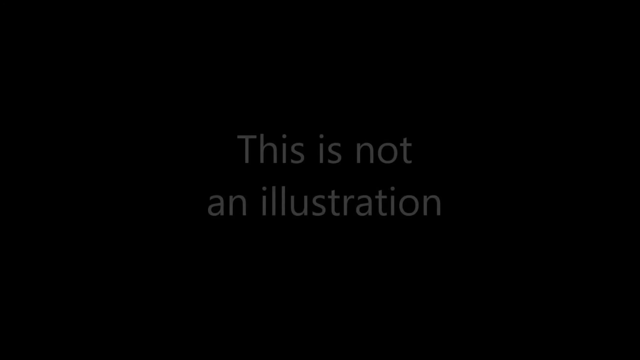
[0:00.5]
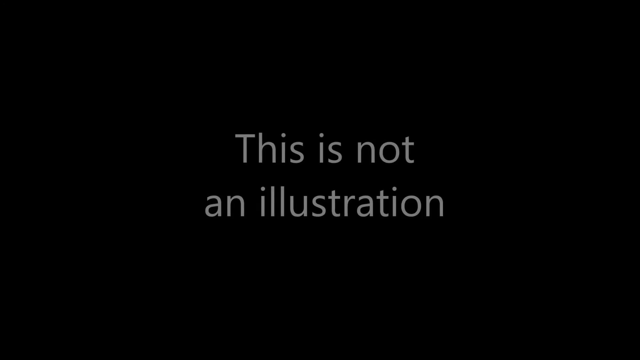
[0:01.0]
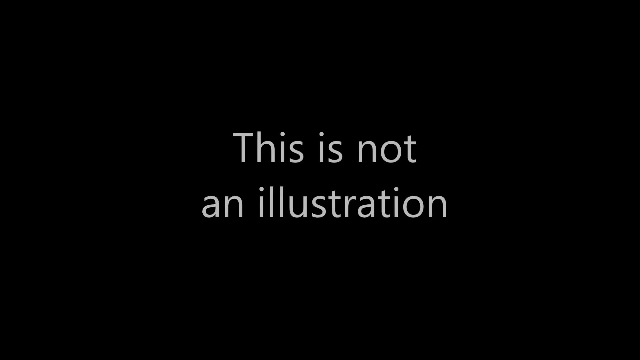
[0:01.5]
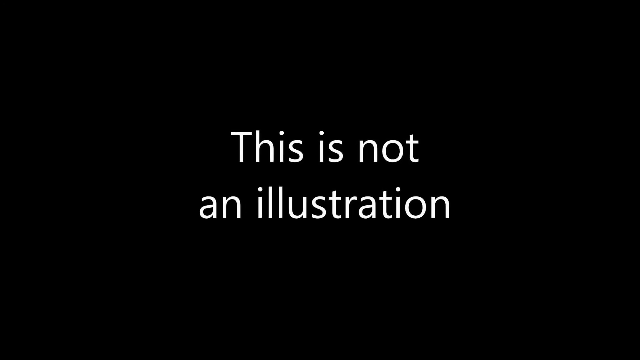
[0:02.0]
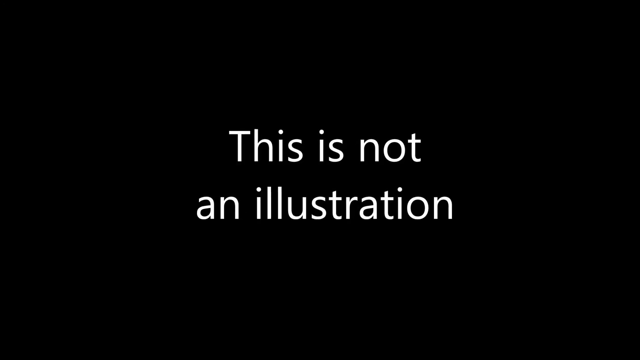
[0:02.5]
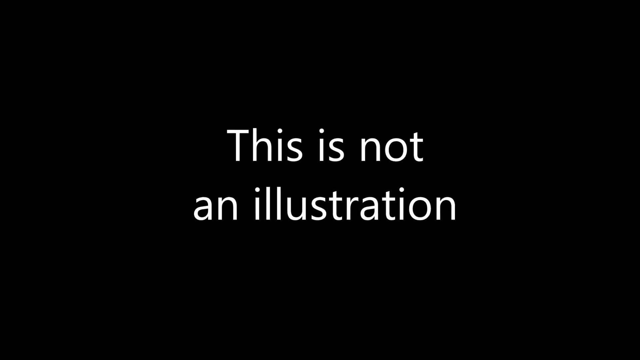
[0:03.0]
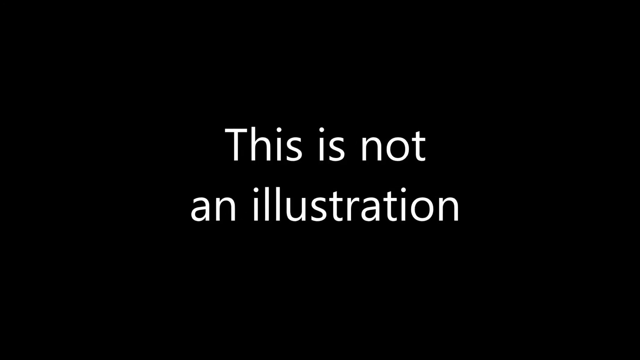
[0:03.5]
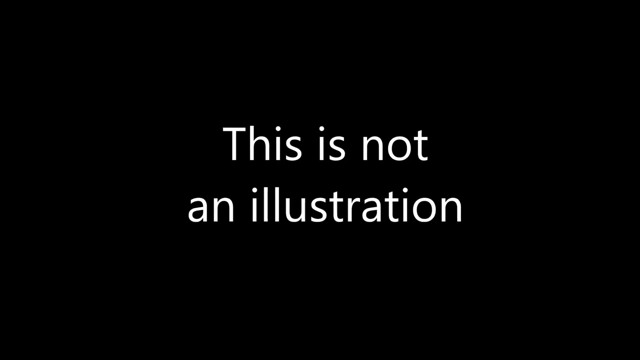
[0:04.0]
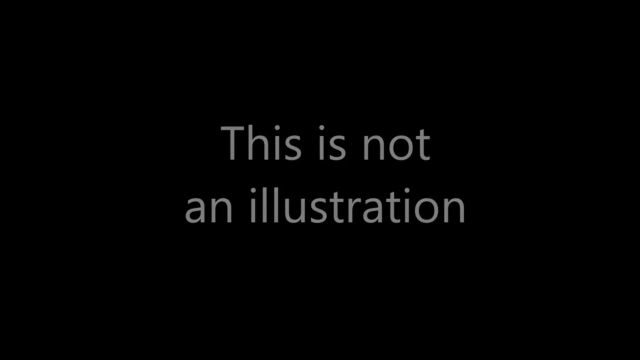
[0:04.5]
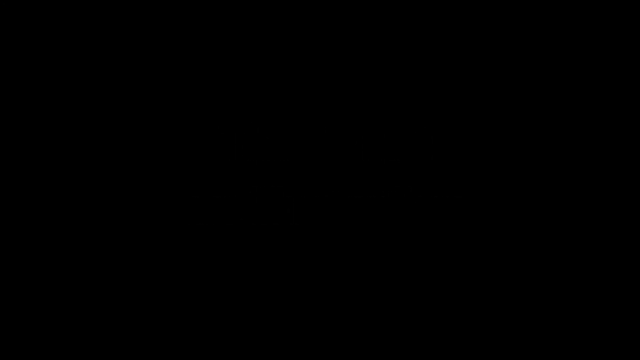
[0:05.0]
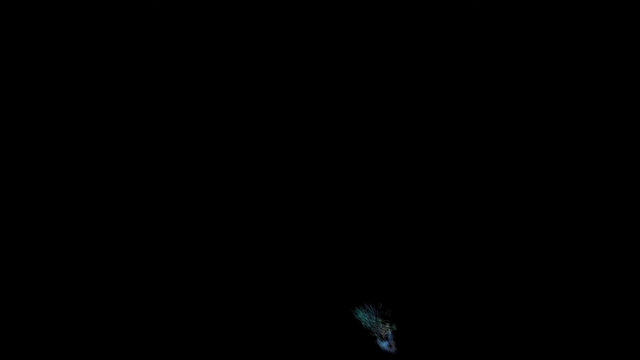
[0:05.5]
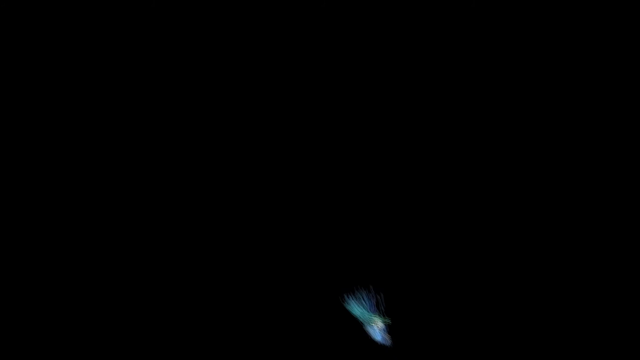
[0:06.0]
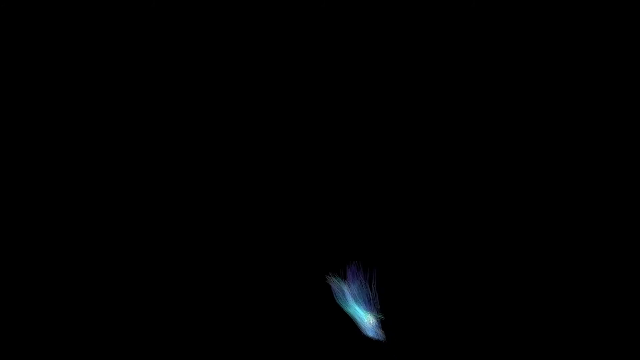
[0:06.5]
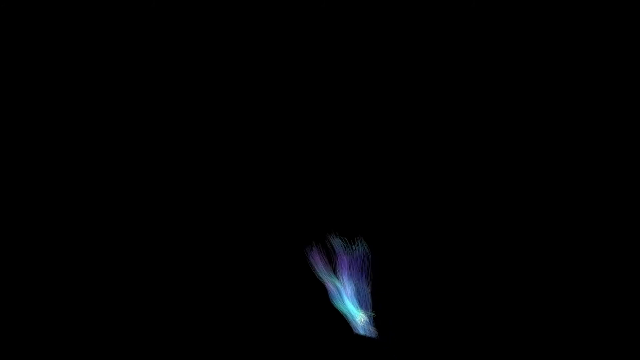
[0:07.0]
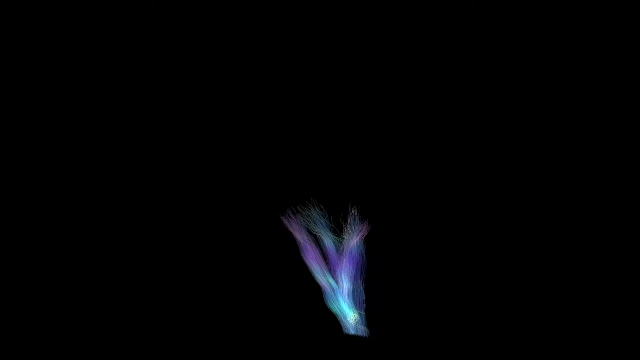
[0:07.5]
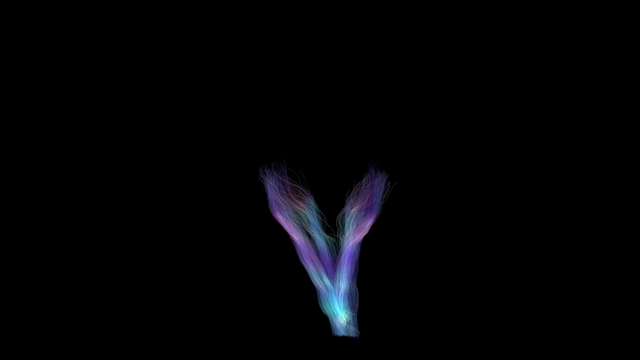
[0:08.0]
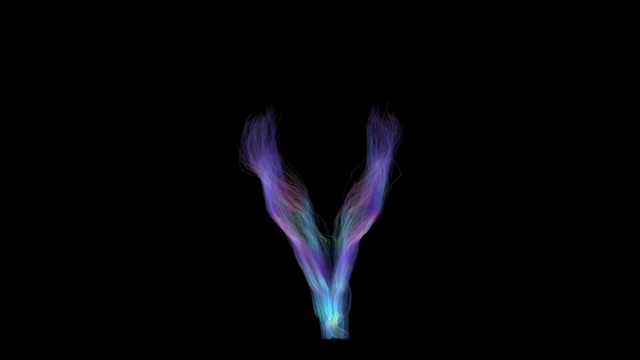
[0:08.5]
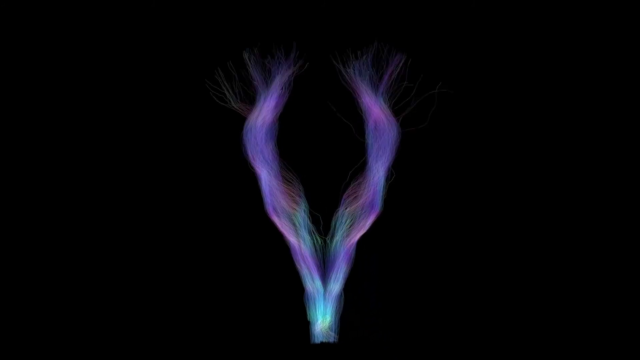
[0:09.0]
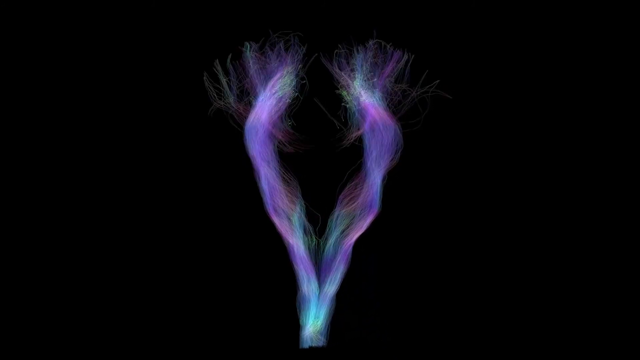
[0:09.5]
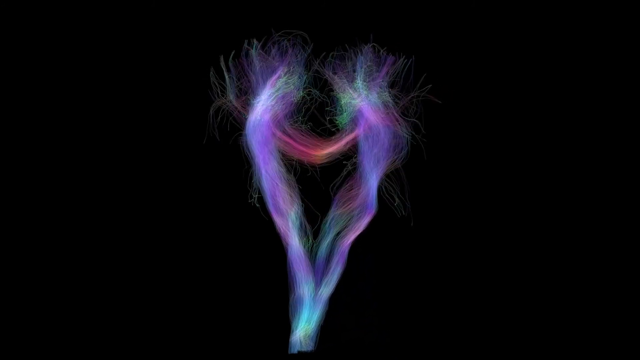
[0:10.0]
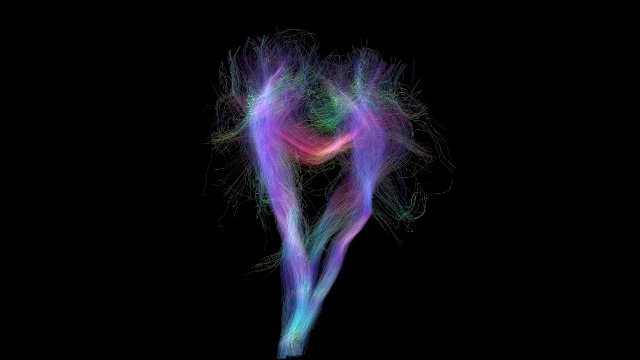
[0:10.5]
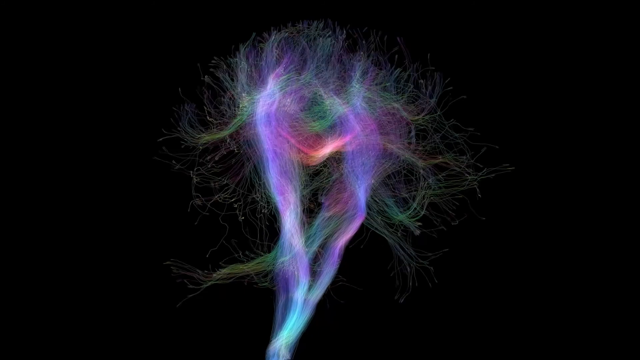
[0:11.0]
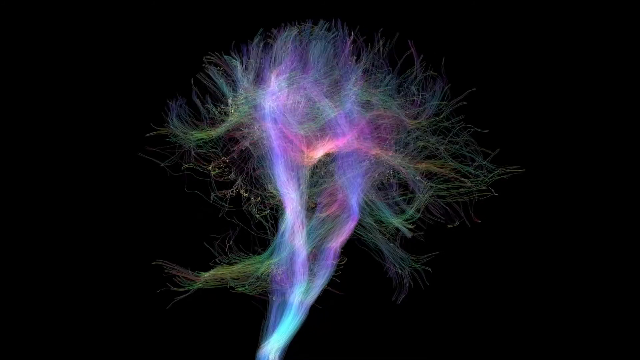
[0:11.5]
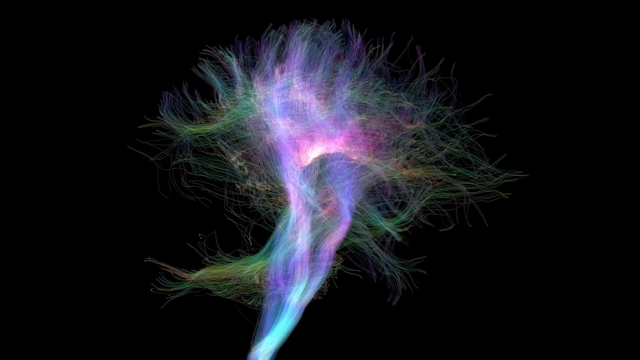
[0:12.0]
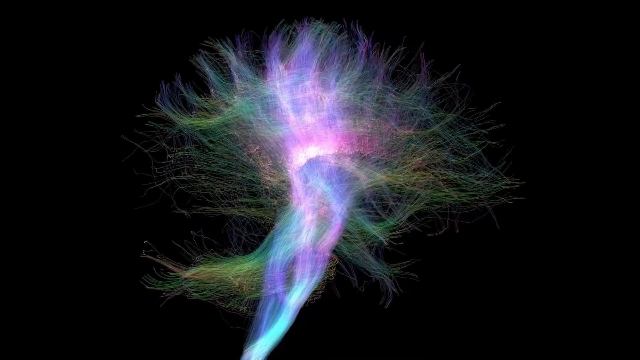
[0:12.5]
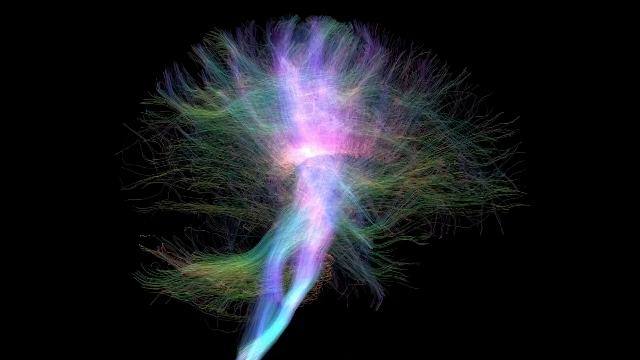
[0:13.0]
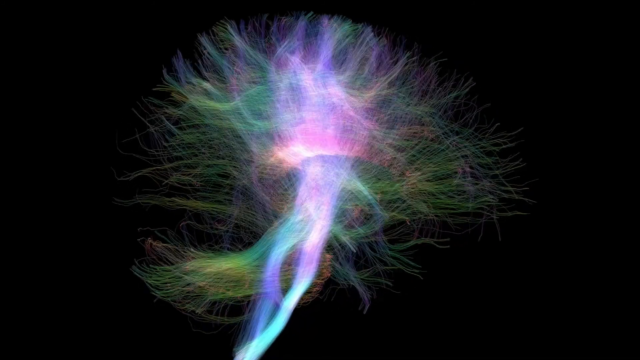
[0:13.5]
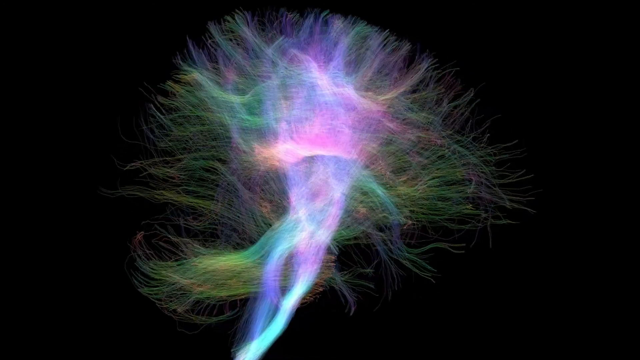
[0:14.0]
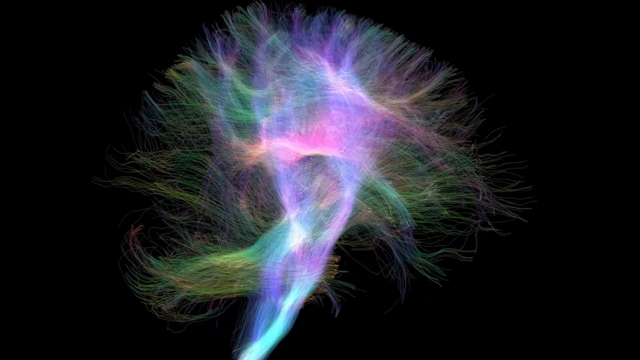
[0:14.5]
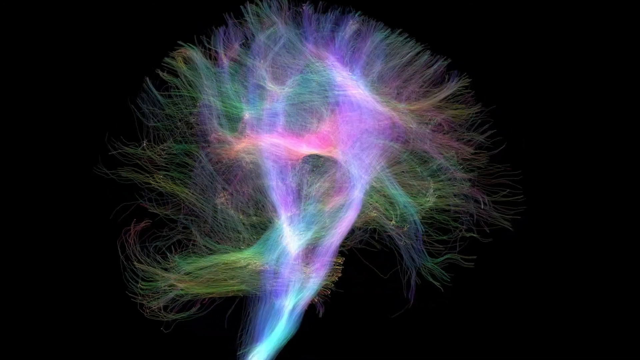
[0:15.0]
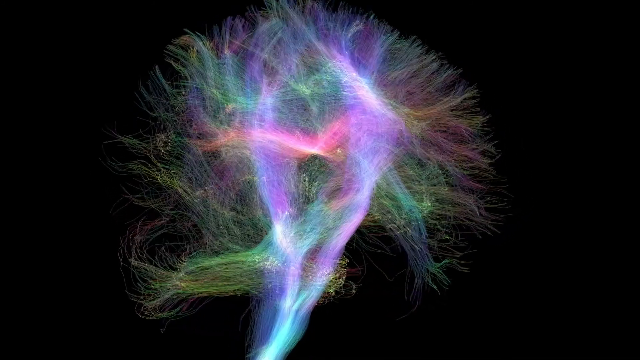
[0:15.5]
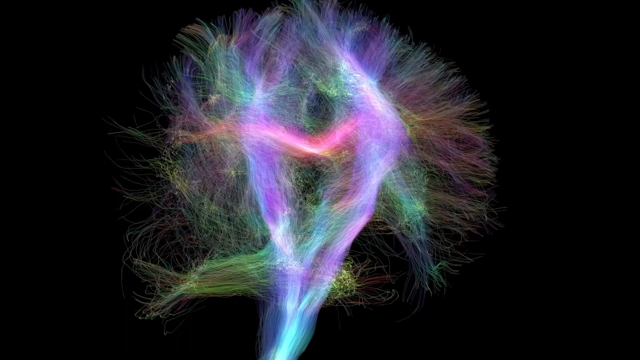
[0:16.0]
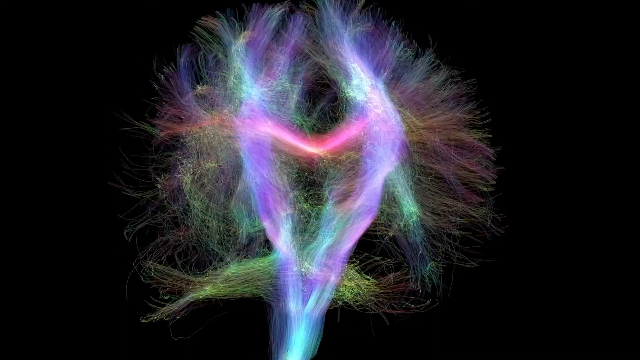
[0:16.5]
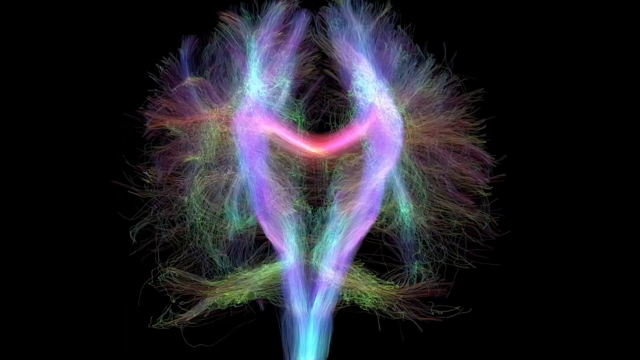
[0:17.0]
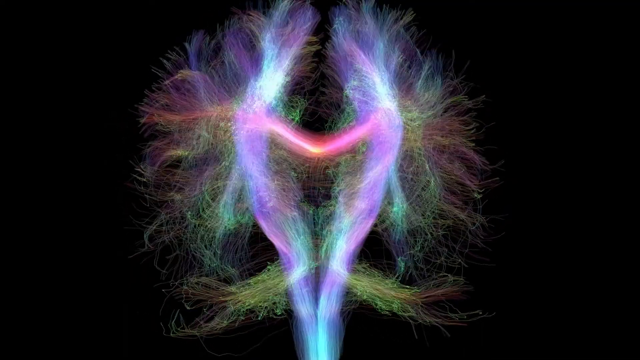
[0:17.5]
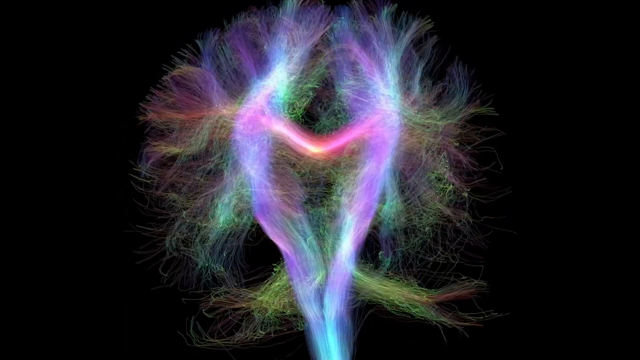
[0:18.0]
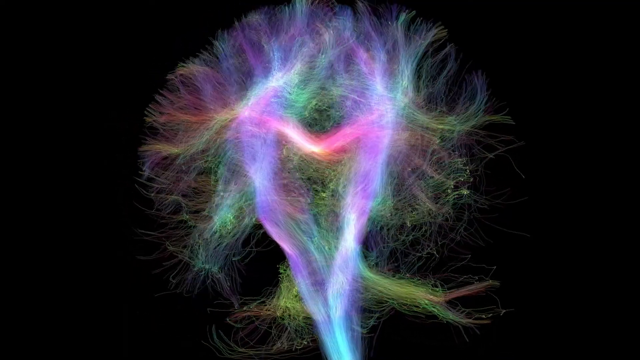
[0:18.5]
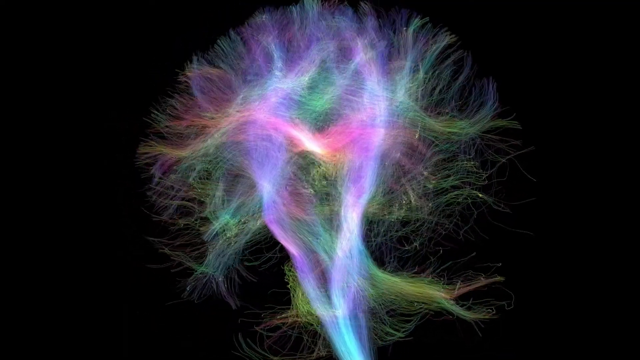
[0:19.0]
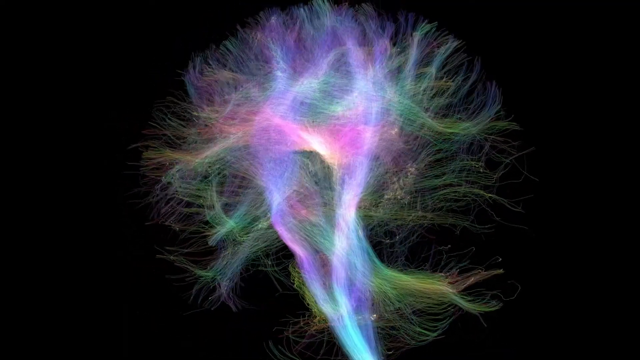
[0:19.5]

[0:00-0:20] The video opens on a completely black screen. White text fades in at the center, reading 'This is not an illustration'; it grows larger before fading out, leaving the screen black again. At the bottom center, colored tendrils begin to form from the bottom upwards. They grow longer and interweave to create a design, largely light blue and becoming more purple as they extend up. The tendrils continue to grow and interweave, creating a complex mesh of interactions. The image rotates clockwise, viewed side-on, displaying a range of colors that includes greens and yellows. The final design is something close to resembling the human brain, and it looks almost hairy because of the thin, wispy tendrils. It has two thick vertical components in the center, bridged higher up in the middle by a thick reddish strand, and the rest of the wispy tendrils emerge from this central structure.